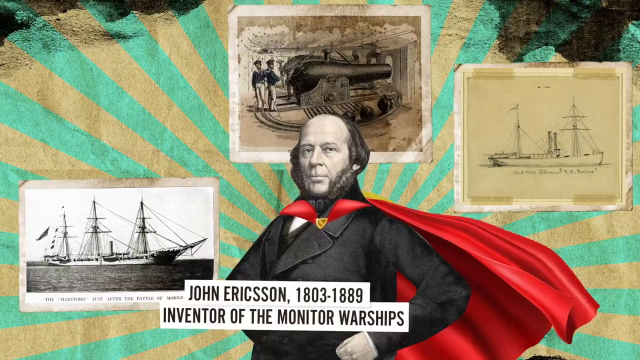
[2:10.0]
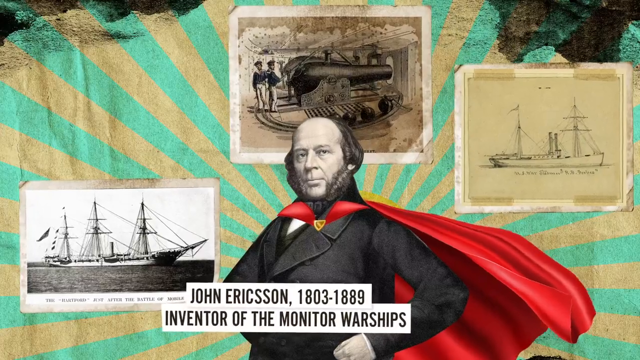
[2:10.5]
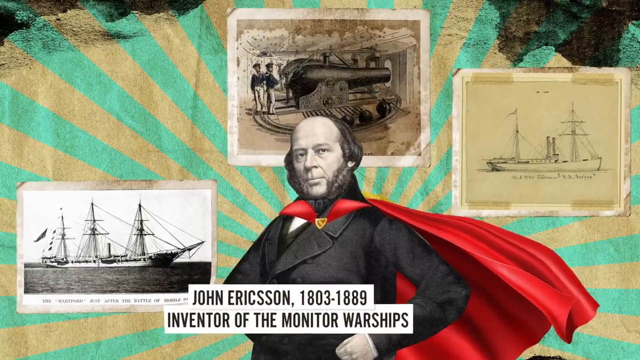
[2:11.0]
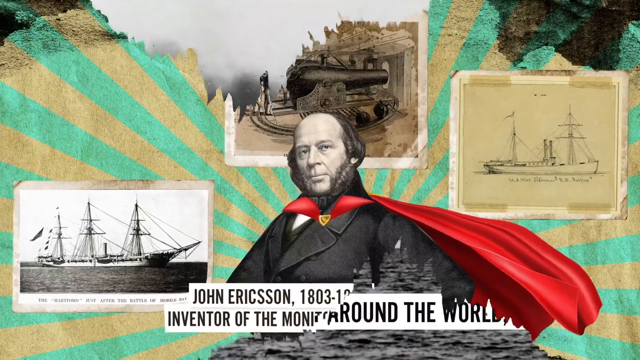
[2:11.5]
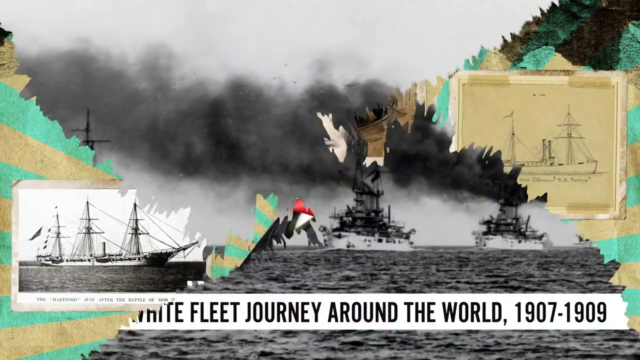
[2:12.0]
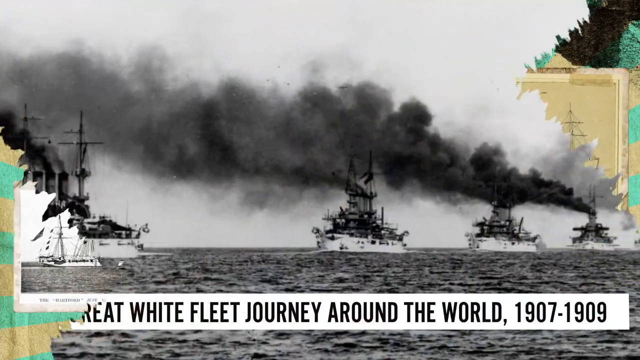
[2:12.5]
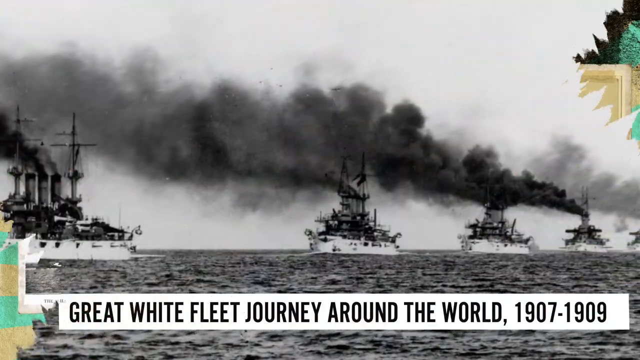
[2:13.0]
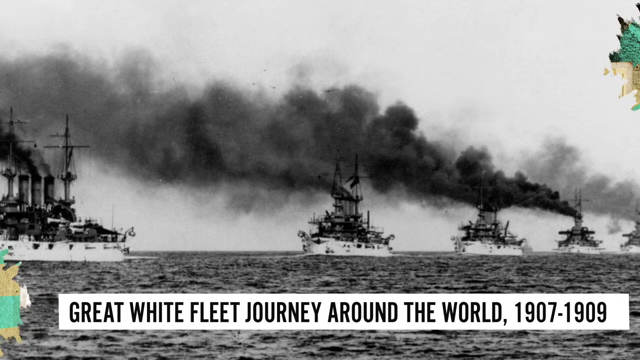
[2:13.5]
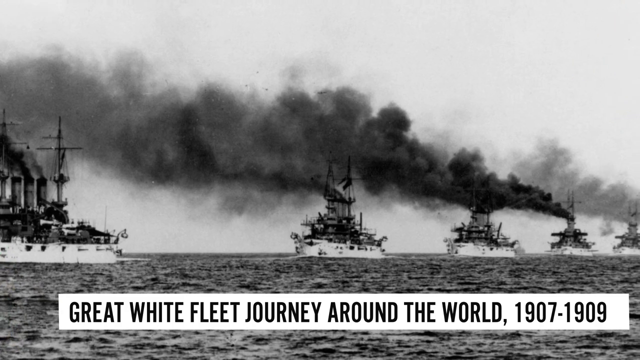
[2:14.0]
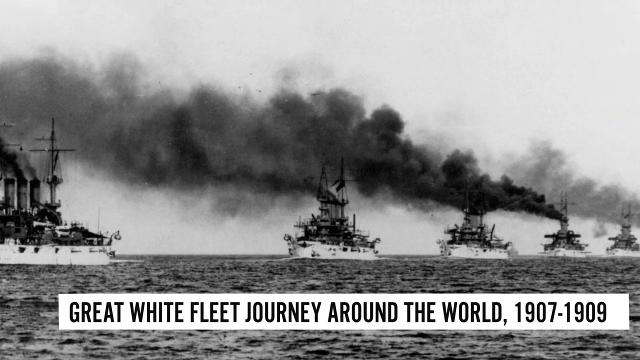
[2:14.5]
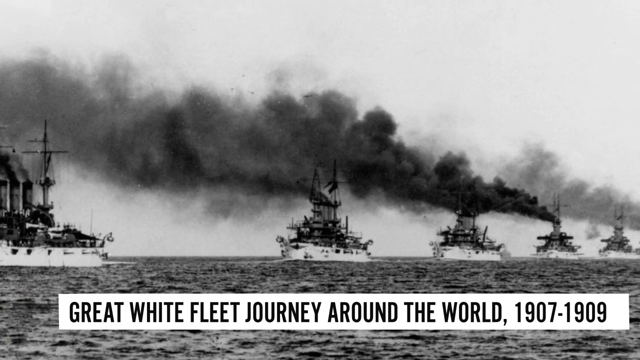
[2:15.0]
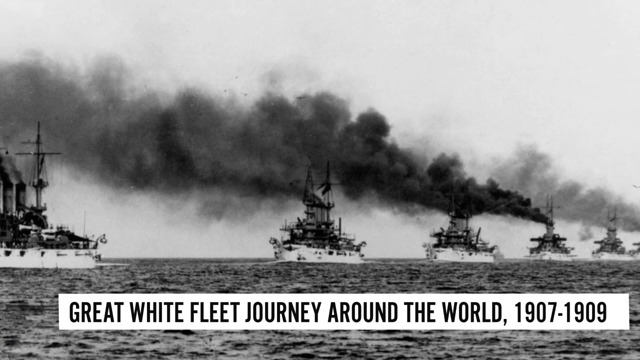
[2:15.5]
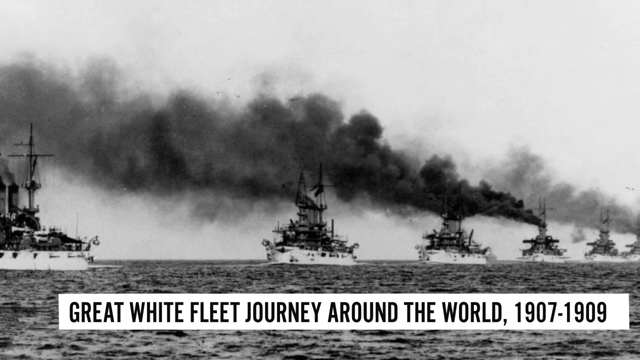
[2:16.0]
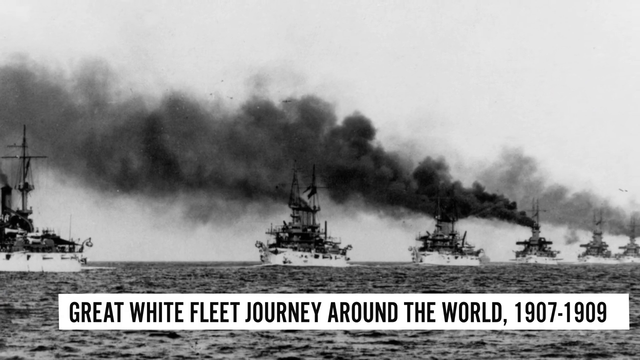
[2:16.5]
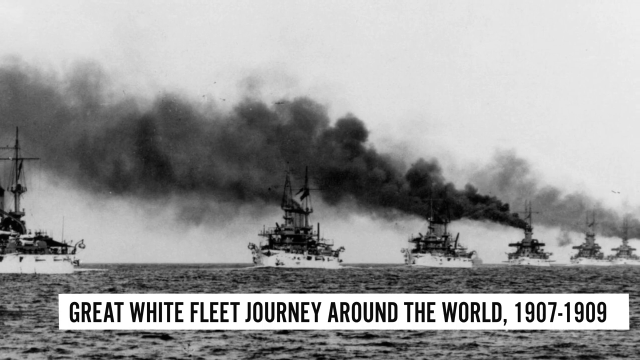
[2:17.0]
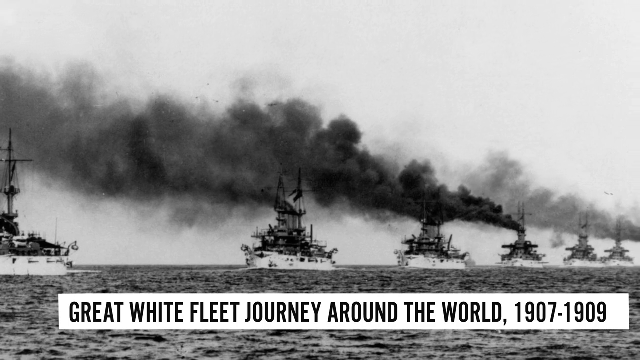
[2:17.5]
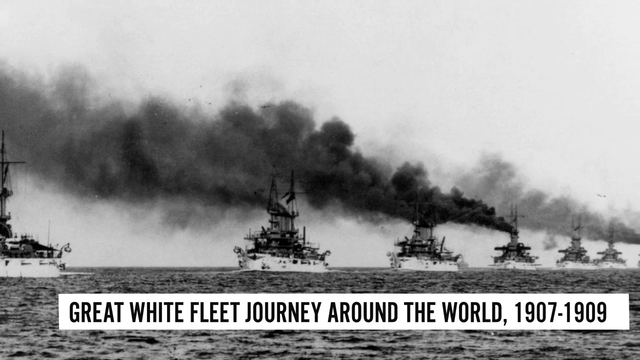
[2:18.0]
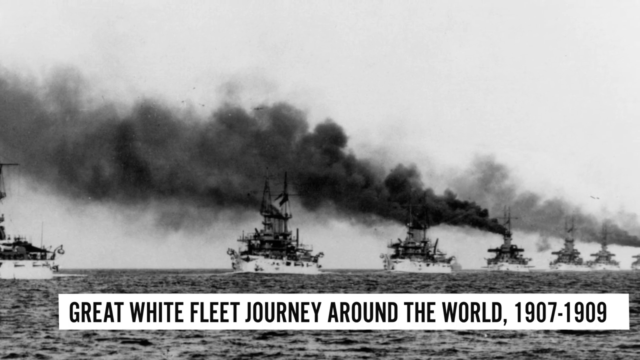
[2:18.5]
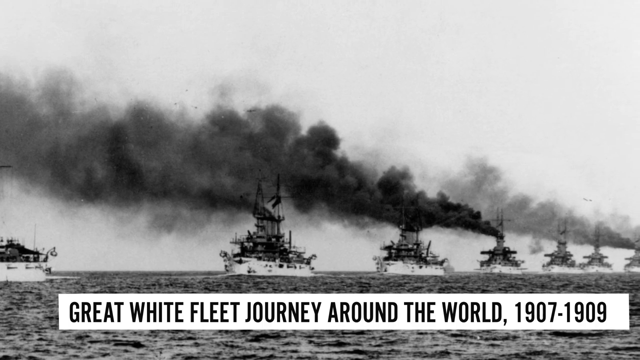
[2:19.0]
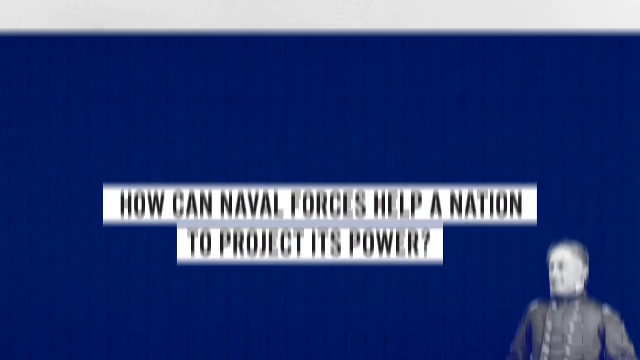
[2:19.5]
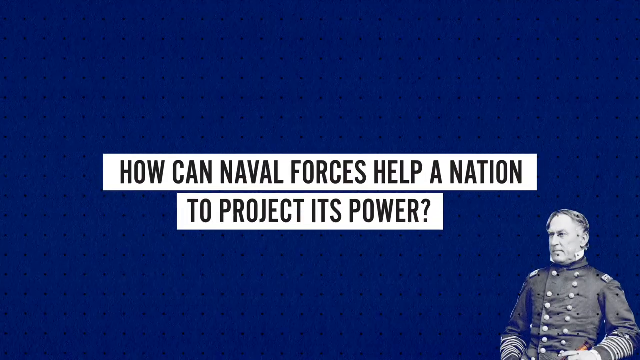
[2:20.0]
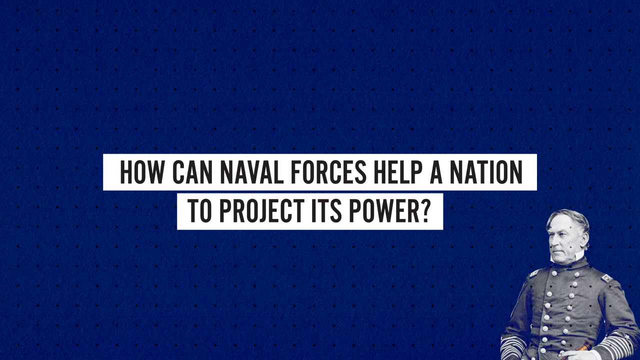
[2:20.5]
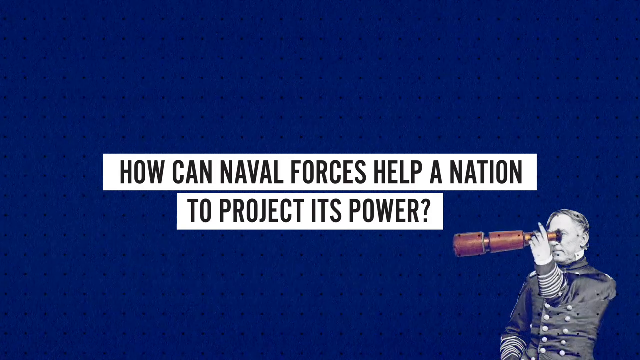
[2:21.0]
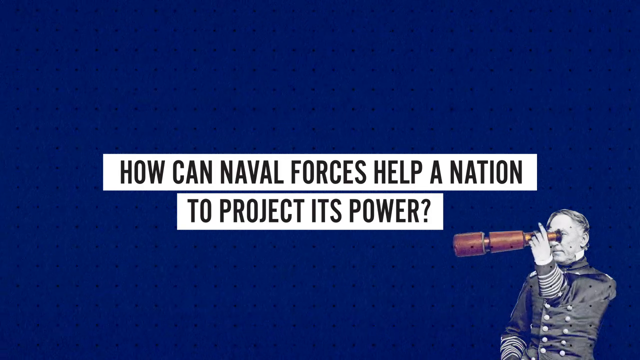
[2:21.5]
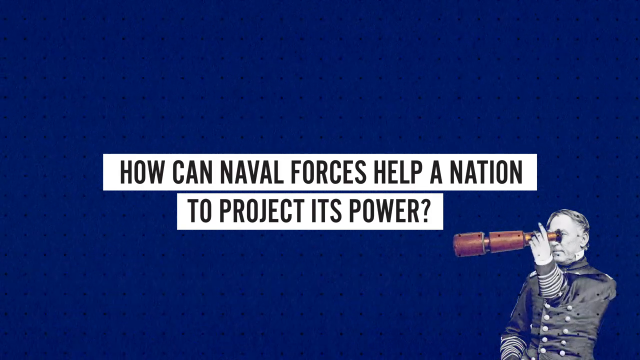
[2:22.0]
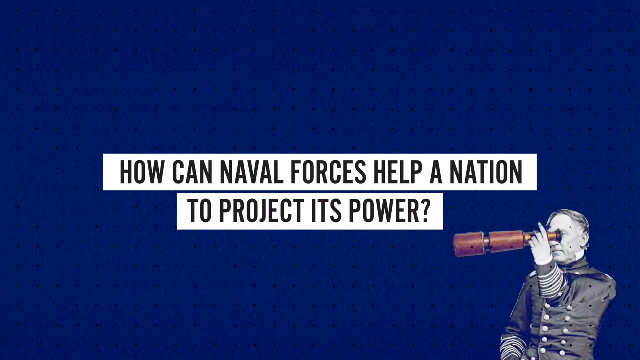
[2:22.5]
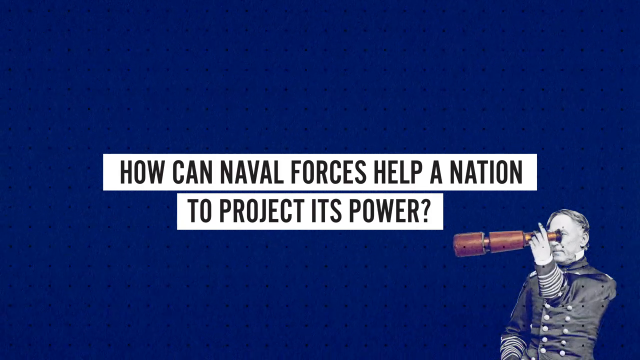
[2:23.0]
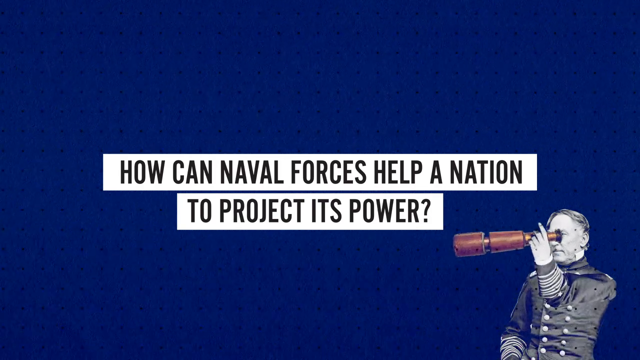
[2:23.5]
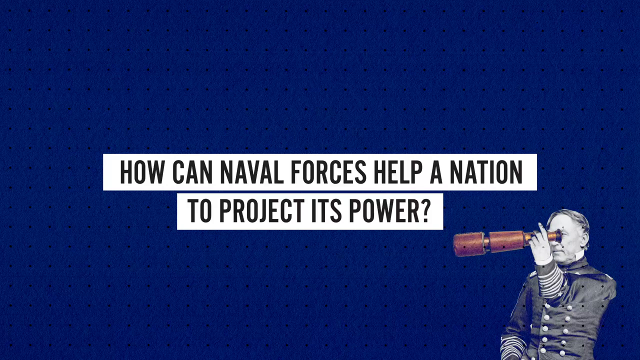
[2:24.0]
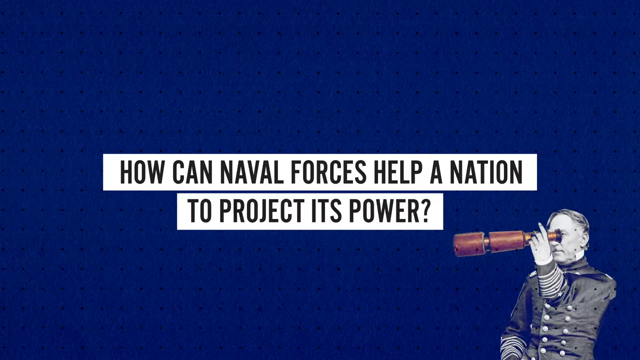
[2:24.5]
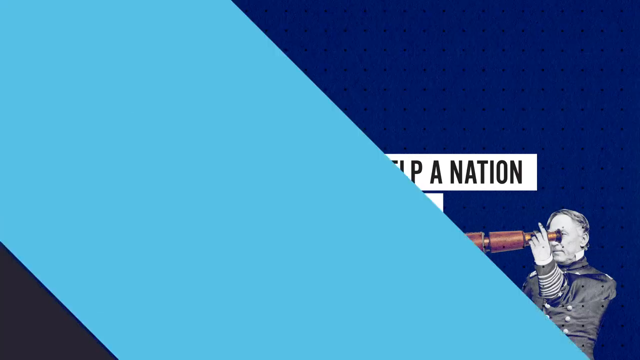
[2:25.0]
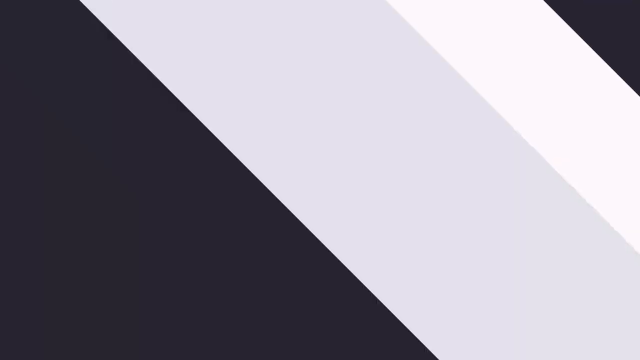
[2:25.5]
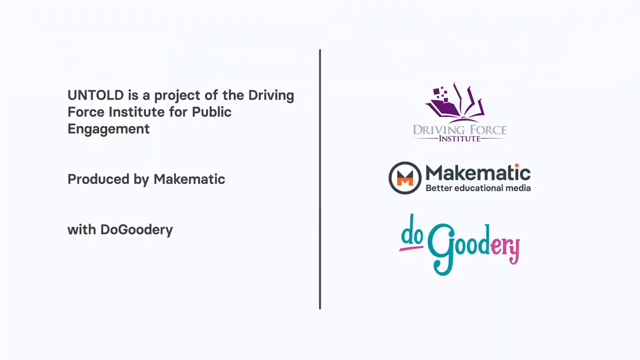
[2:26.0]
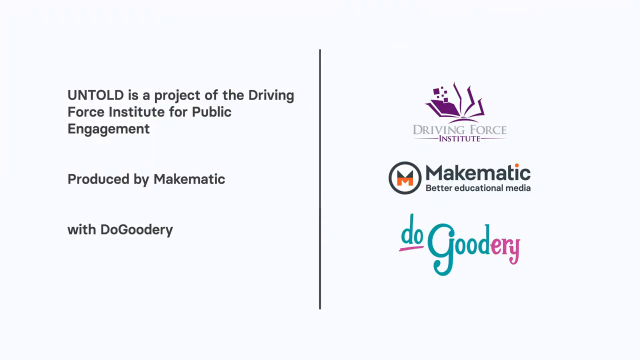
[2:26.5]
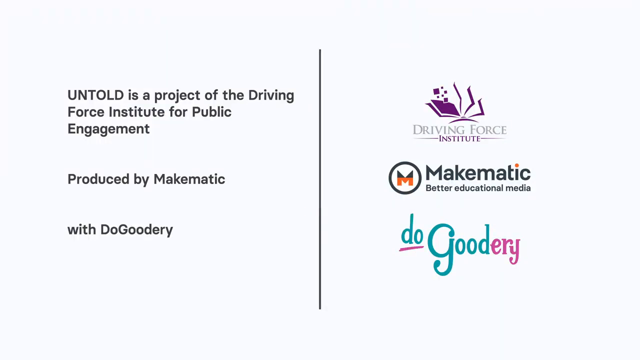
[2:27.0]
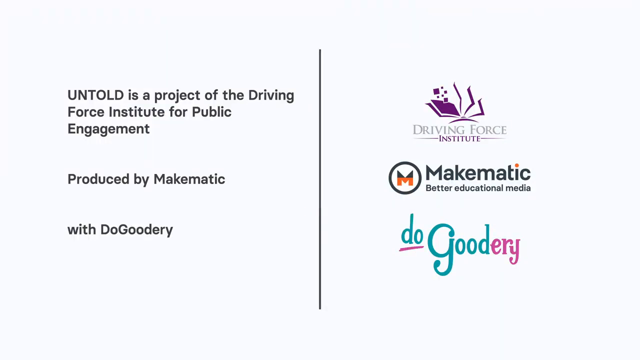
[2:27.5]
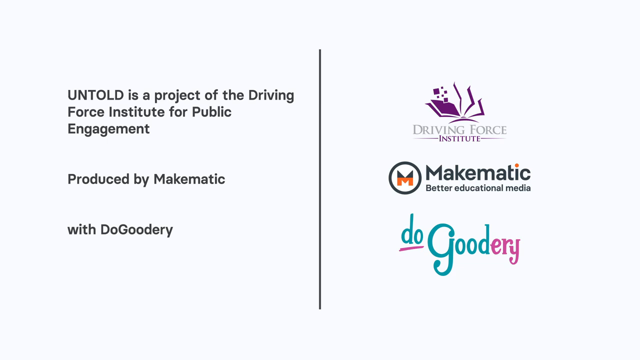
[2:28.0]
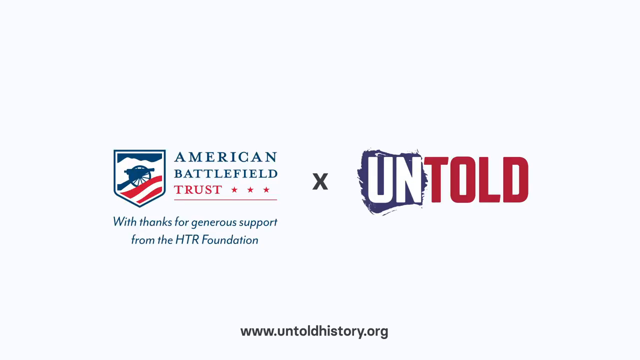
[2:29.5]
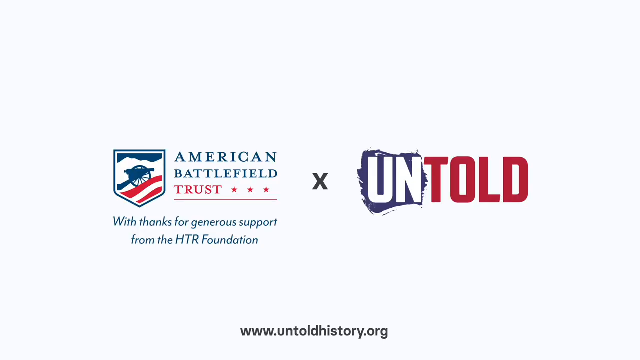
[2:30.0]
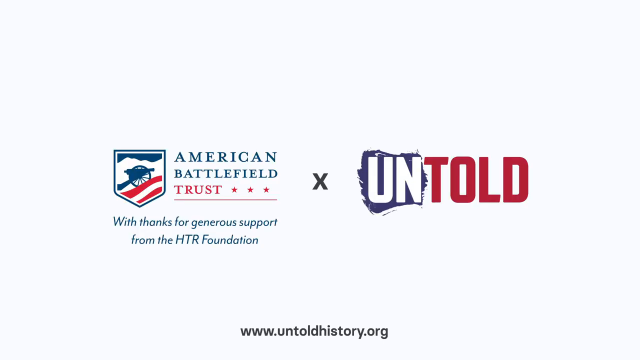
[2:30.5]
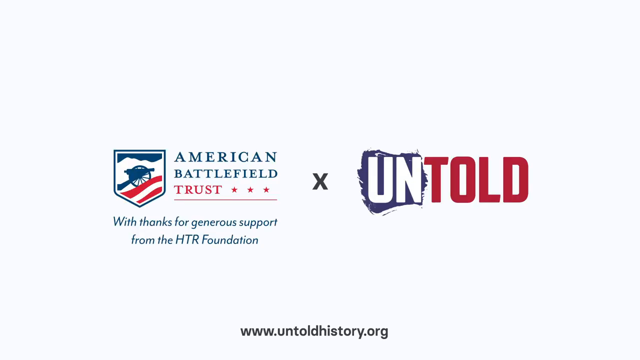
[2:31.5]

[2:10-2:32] An image shows a man in a red cape and a suit jacket; the jacket and the man look realistic to the historical period of the photograph, but the red cape is a modern addition. The view fades into another black and white historical photograph that looks like it was taken on the water. The water is dark gray, and five large ships are releasing thick clouds of dark gray and black smoke. A caption says something about the Great White Fleet and its journey around the world in the early 1900s. Next is a page with a dark blue background where white text says "how can naval forces help a nation to project its power?" alongside a man holding a telescope. Then text on the left side of the screen says "Untold is a project of the Driving Force Institute for Public Engagement, produced by Makematic with DoGoodery," and on the right side it says "Driving Force Institute, Makematic, Bitter Educational Media, and DoGoodery."